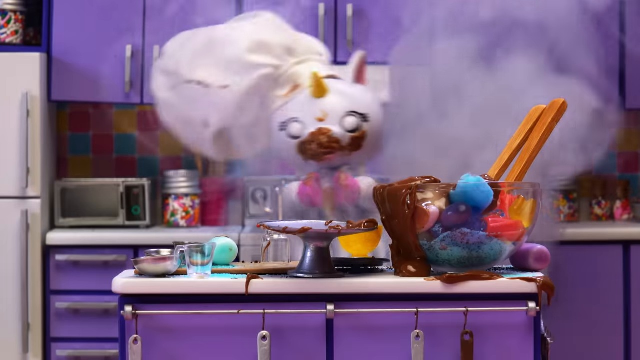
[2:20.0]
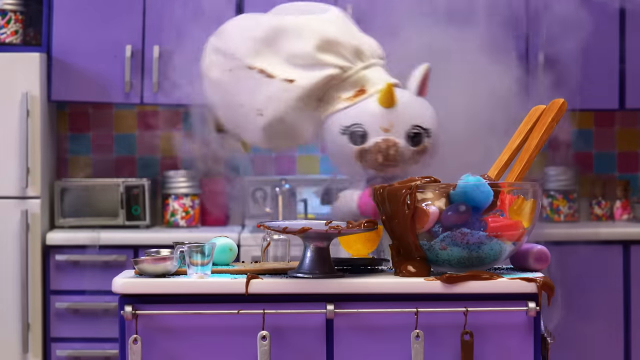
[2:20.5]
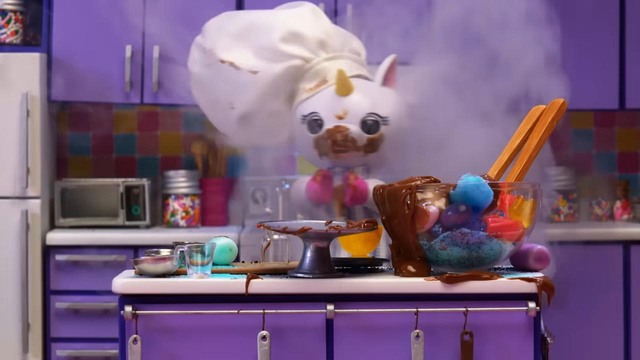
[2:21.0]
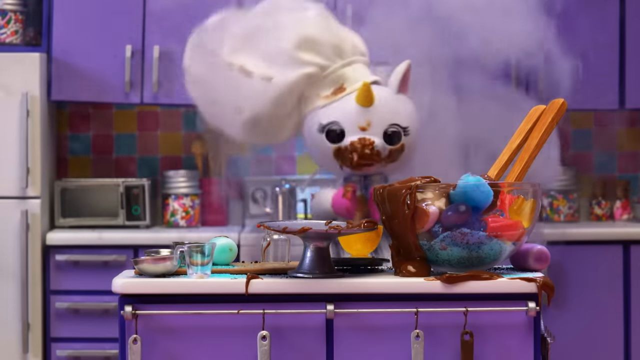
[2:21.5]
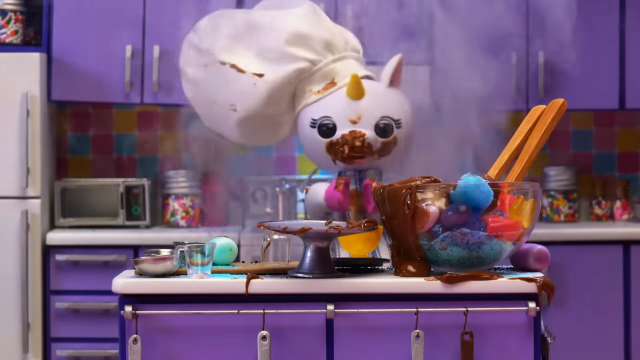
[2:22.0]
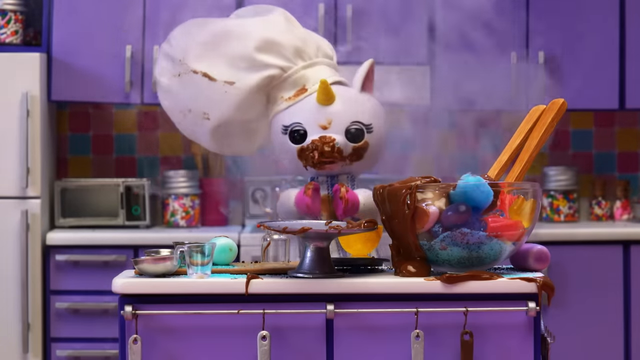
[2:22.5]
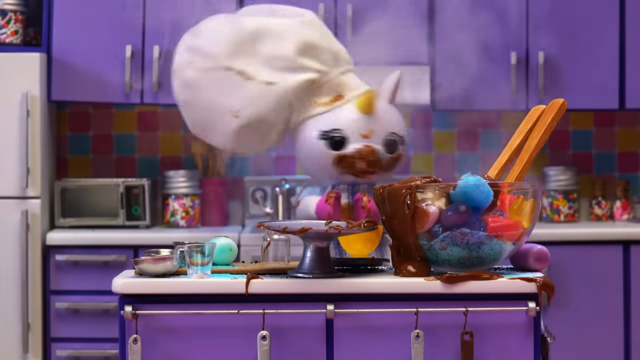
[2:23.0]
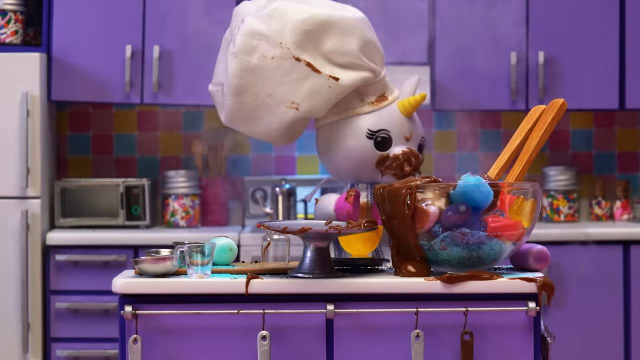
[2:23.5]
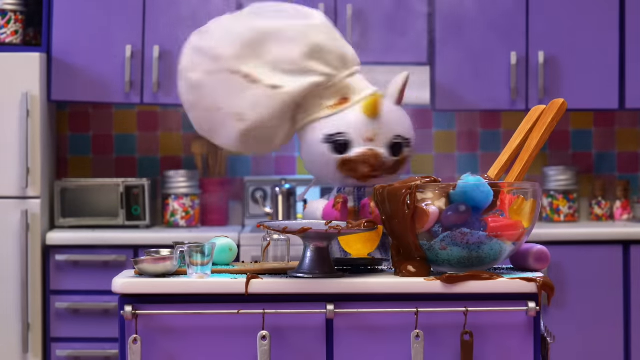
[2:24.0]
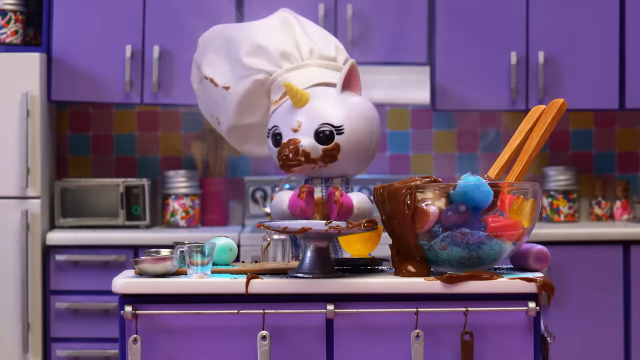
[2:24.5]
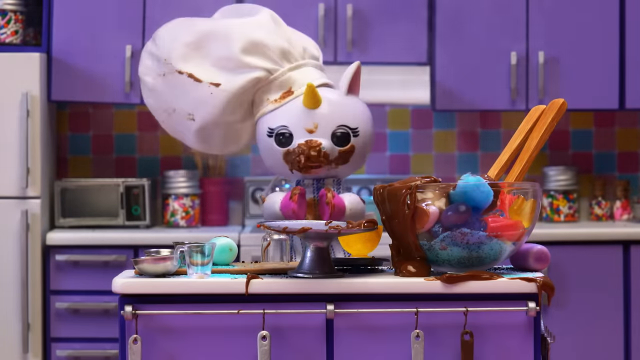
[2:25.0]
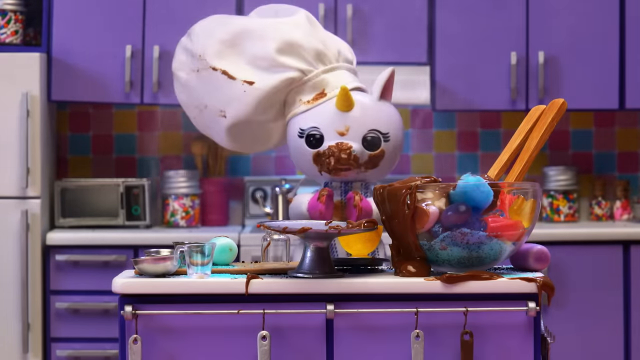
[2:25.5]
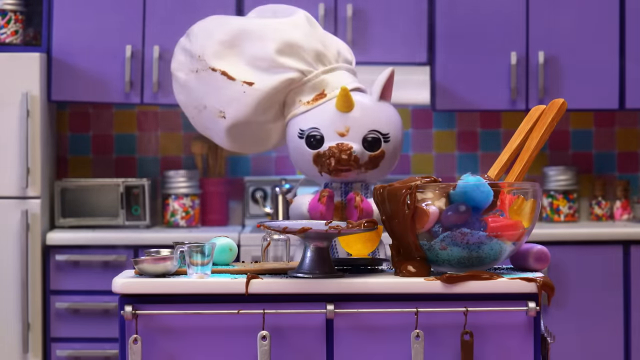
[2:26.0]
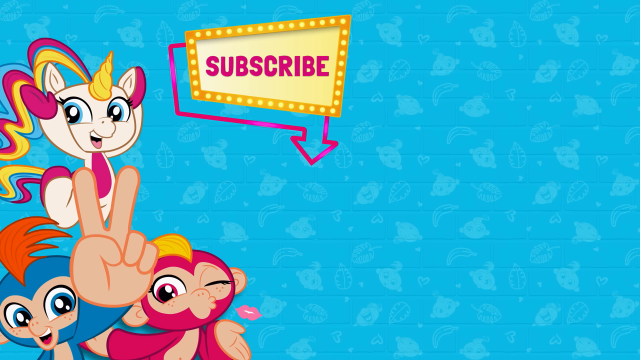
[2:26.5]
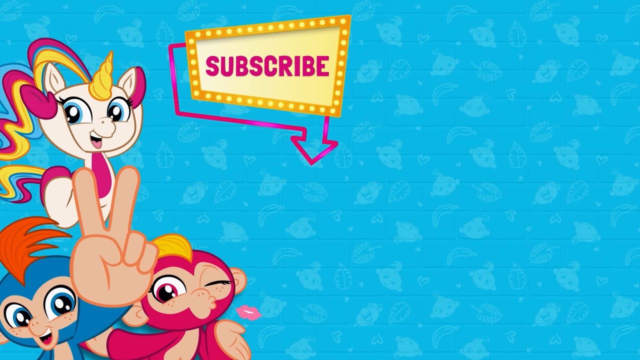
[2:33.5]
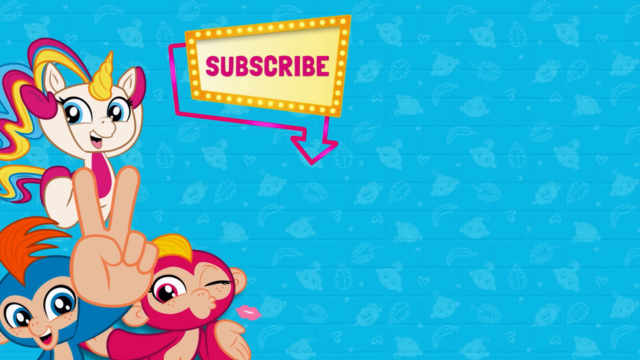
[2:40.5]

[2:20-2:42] A lot of smoke comes from behind the unicorn, and she looks around, blinking, almost seeming confused. The screen then cuts to an image with a blue background that is not solid but has little indistinct designs on it. On the left side of the screen are a blue monkey with orange hair making a peace sign and a pink monkey with yellow hair making a kissy face with a wink. The unicorn Gigi is also shown, with her yellow horn and rainbow-colored hair in blue, pink and yellow; she is white with pink hooves, a pink belly and blue eyes. She looks happy and excited, with her hands raised above her head and one leg kicked up in the air behind her. A sign reads "subscribe", with yellow dots bordering the message, and another little sign around it has an arrow pointing down, possibly where a subscribe button would go.